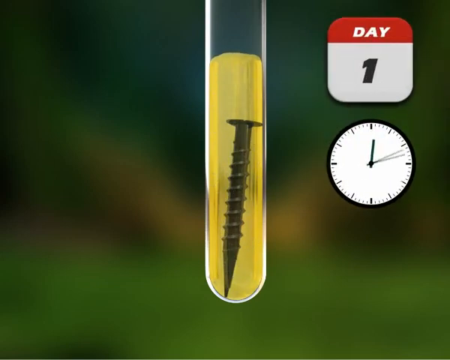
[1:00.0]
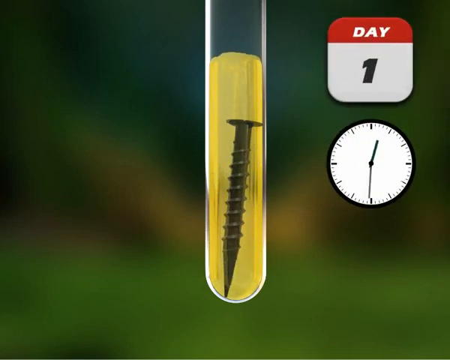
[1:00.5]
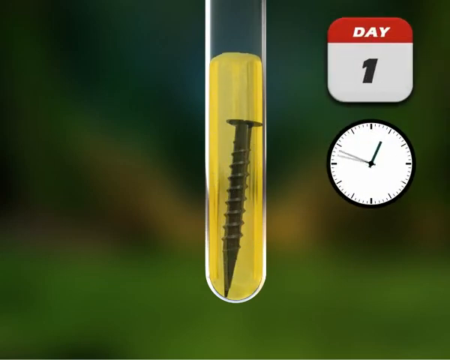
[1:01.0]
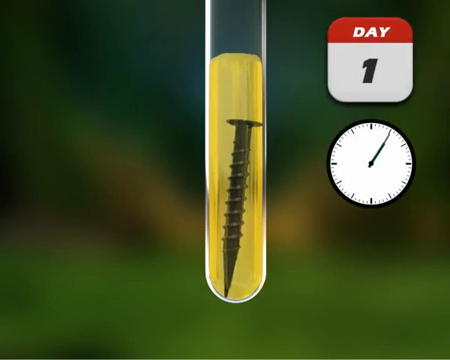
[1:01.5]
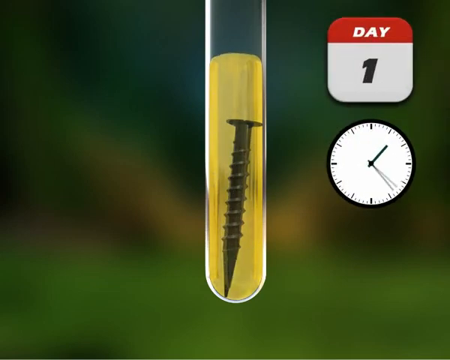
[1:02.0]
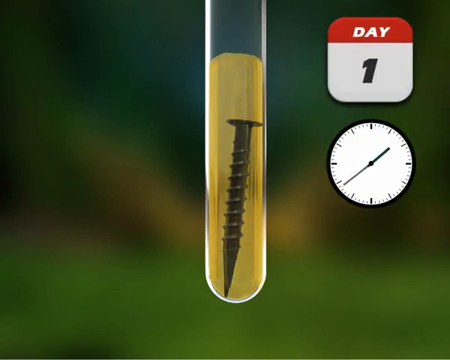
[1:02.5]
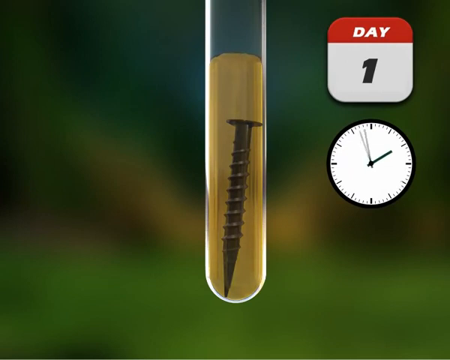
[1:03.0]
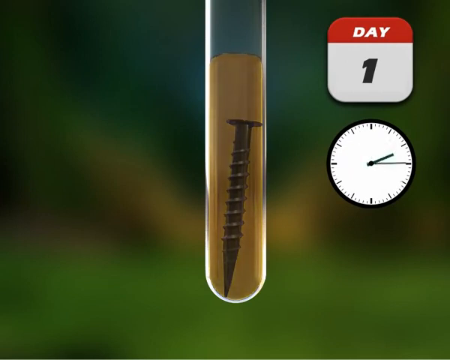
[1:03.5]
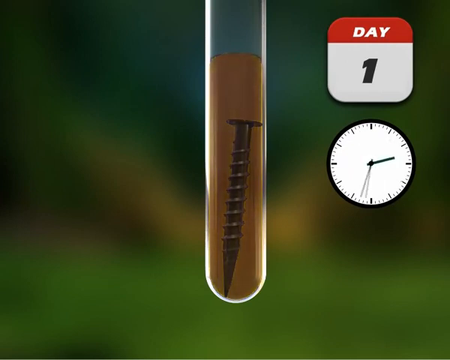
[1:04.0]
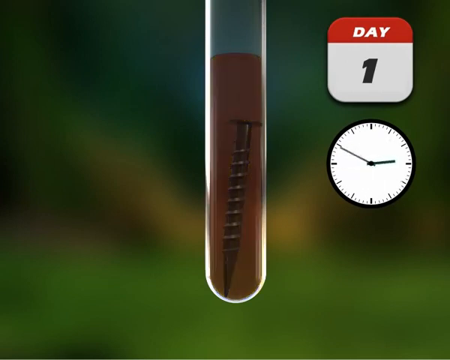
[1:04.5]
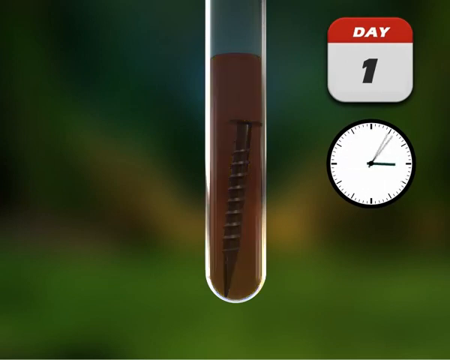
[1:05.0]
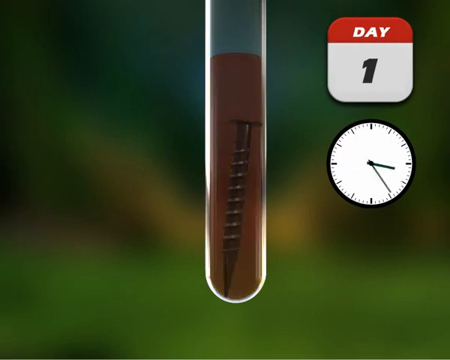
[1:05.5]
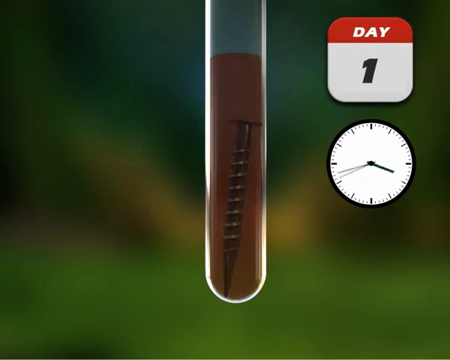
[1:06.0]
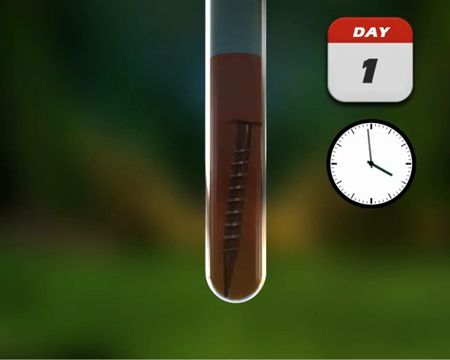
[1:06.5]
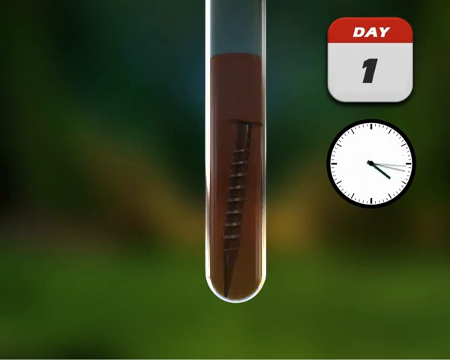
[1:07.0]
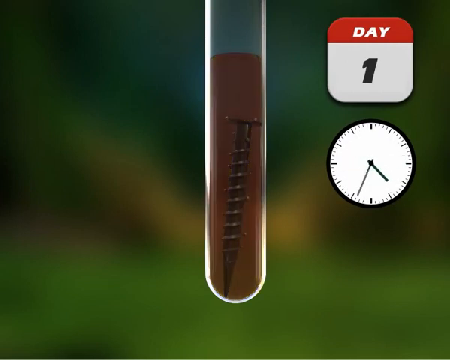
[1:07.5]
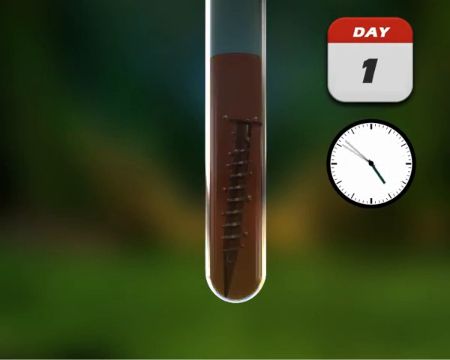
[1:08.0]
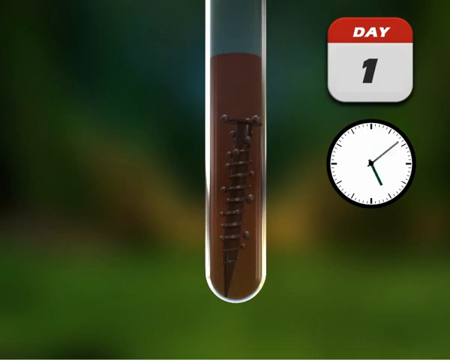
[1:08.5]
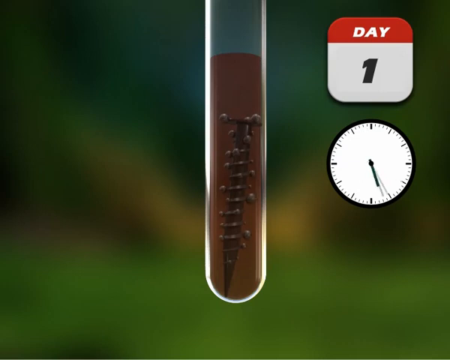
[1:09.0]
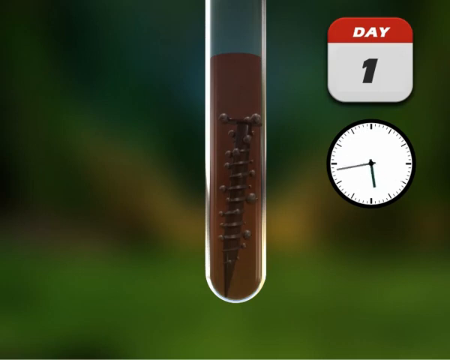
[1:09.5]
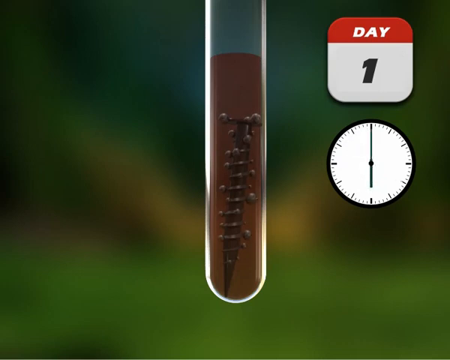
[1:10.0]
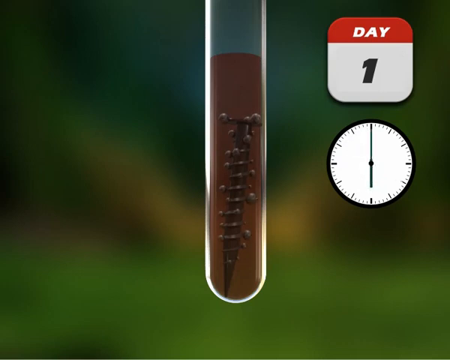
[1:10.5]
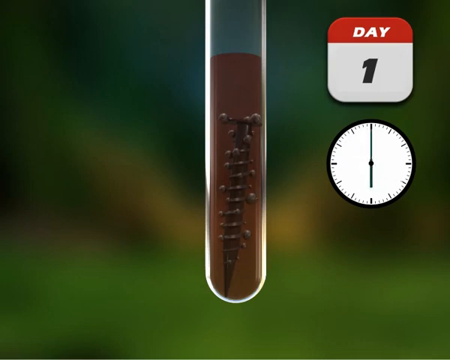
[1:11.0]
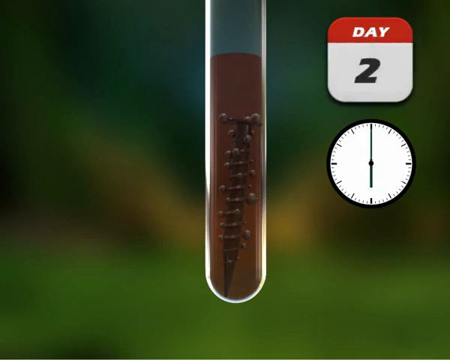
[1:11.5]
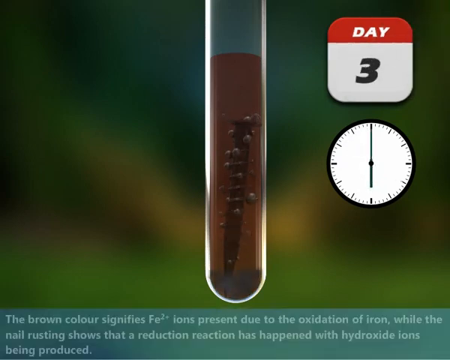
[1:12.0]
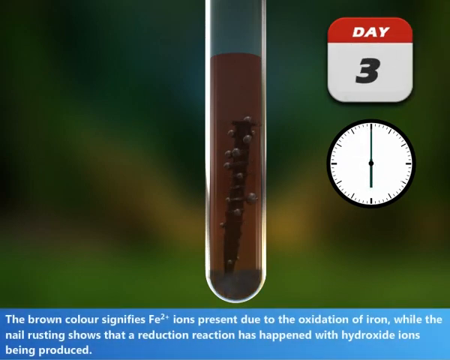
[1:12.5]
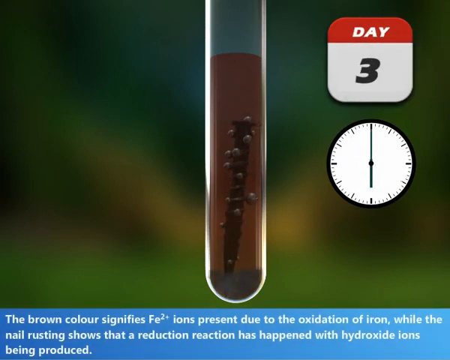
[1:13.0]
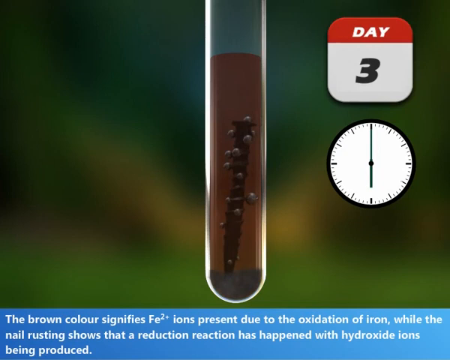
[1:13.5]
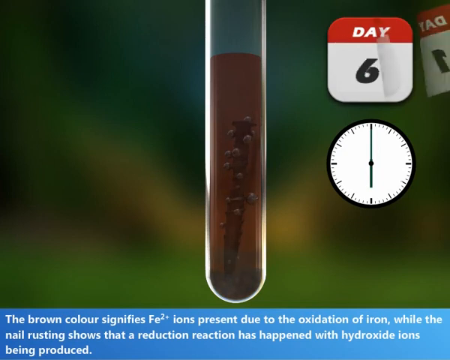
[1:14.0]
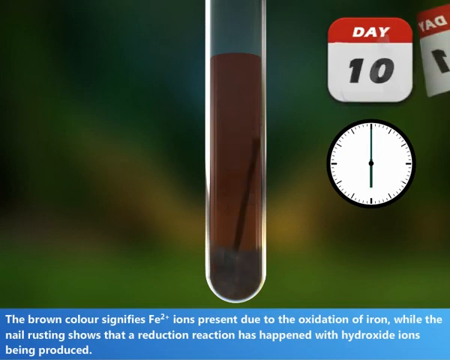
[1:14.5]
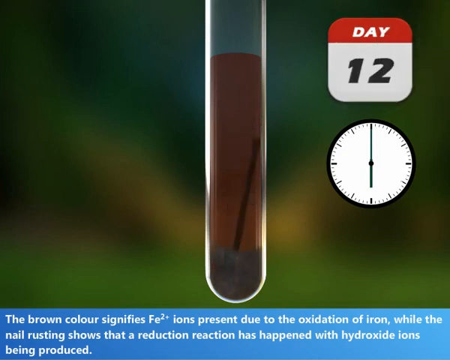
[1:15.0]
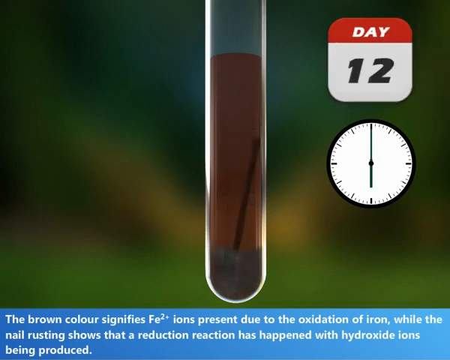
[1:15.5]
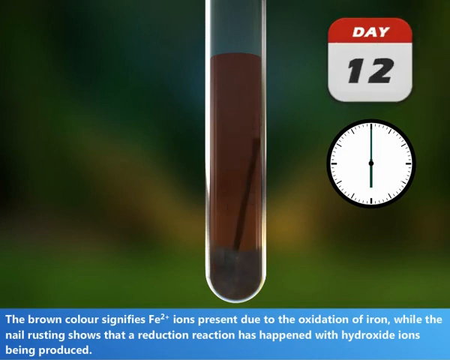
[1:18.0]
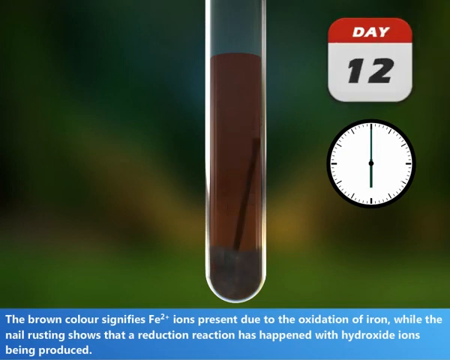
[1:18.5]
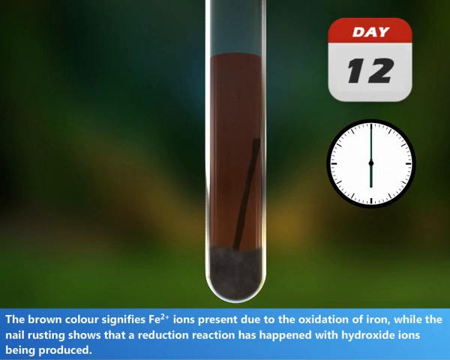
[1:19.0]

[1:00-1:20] A vial full of a yellow liquid is shown, with a black screw within the liquid. At the top right is a calendar marker that says "Day 1," and below it is a clock with a minute hand, an hour hand and a second hand. The clock has no numbers, only lines marking the minutes and hours. The background is blurry, with the colors green, orange and black. The clock starts spinning clockwise, with the hour and minute hands moving from two o'clock to three, four and five o'clock. The fluid inside the vial turns brown or reddish brown, and some bubbles start to emanate from the surface of the screw. The clock stops at six o'clock, and the calendar goes from day 1 to 2, then 3.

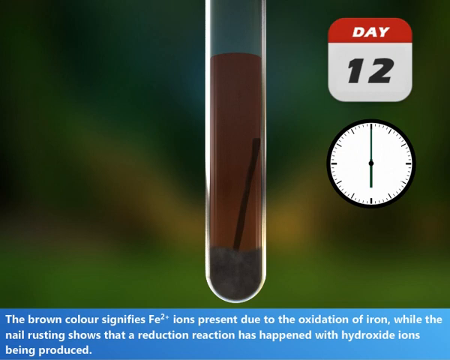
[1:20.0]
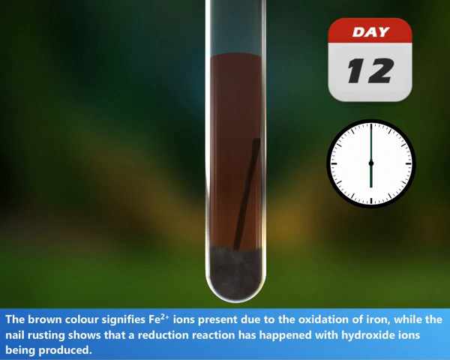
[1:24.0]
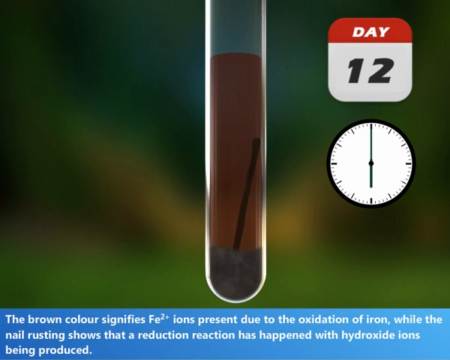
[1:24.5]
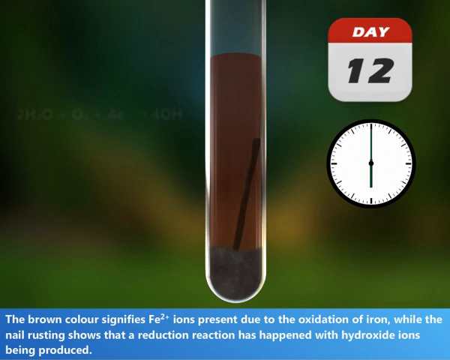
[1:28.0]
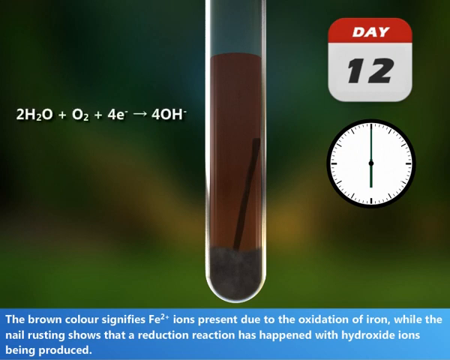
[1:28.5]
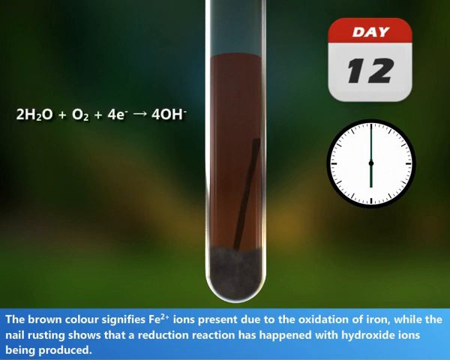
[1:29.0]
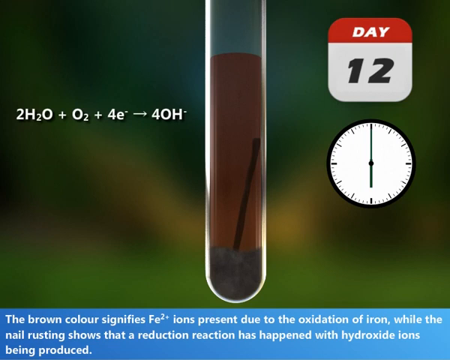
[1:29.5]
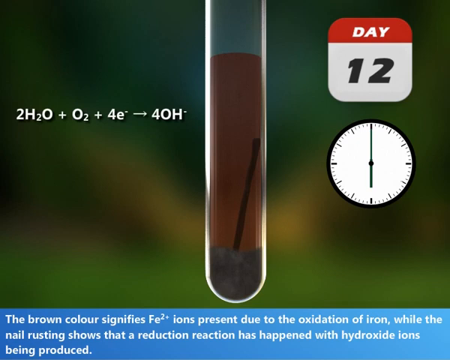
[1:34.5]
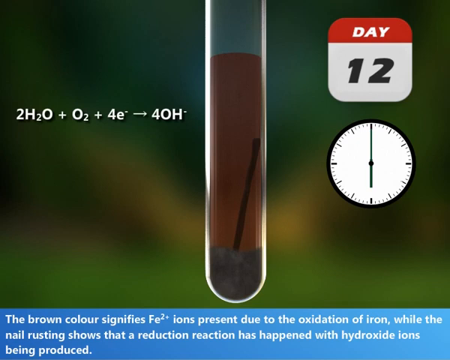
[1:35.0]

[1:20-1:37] A blue banner at the bottom of the screen contains white text that says "the brown color signifies Fe2 ions present due to the oxidation of iron, while the nail rusting shows that a reduction reaction has happened with hydroxide ions being produced." At the top right is a calendar-looking item that says "Day 12," and below it is a clock at 6 o'clock. The background is blurry, so what is behind cannot be made out, but it shows green, red, orange, black and a dark, foresty-looking green. In the center of the screen is a vial that looks like clear glass, with a brown fluid inside. Inside is what appears to be maybe a corroded piece of metal that looks kind of like a burnt match, and at the bottom is some kind of residue that looks kind of gray.